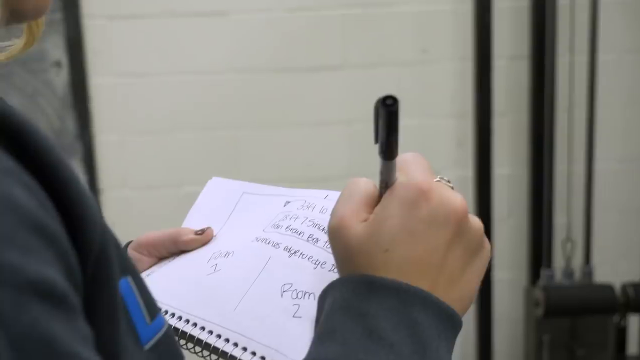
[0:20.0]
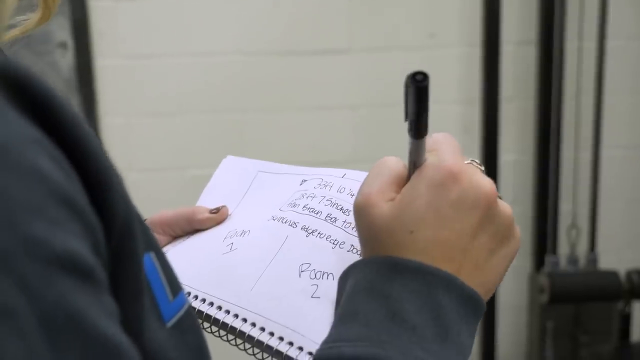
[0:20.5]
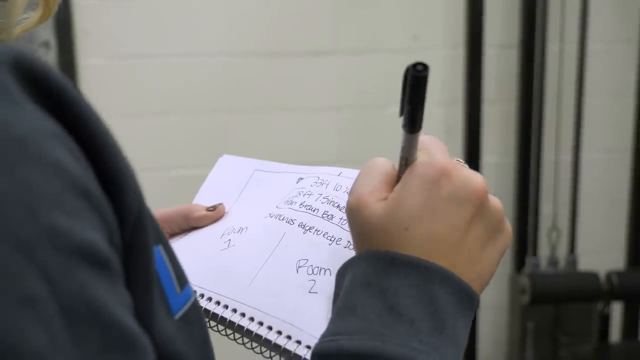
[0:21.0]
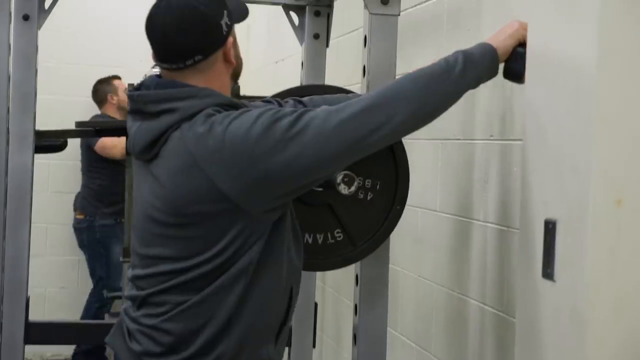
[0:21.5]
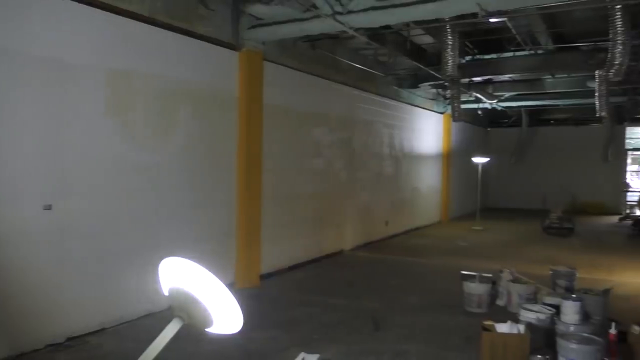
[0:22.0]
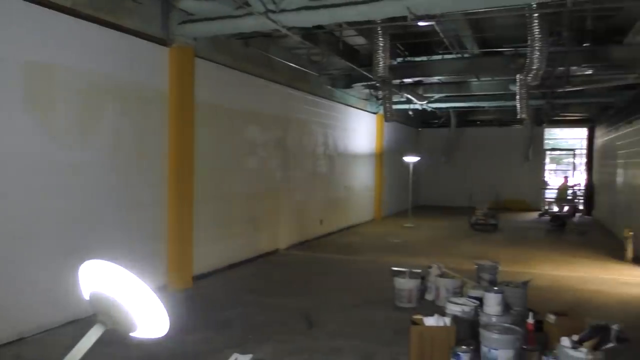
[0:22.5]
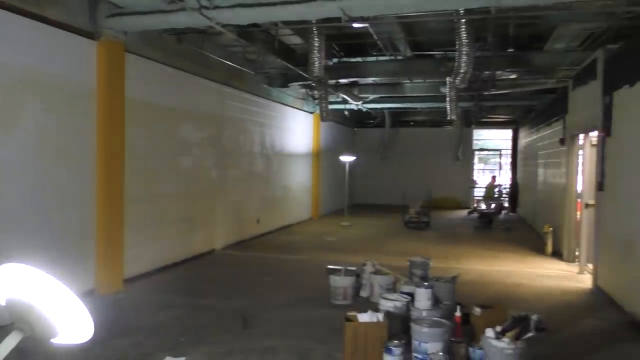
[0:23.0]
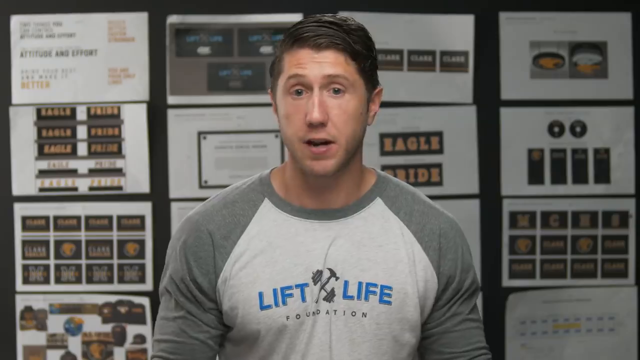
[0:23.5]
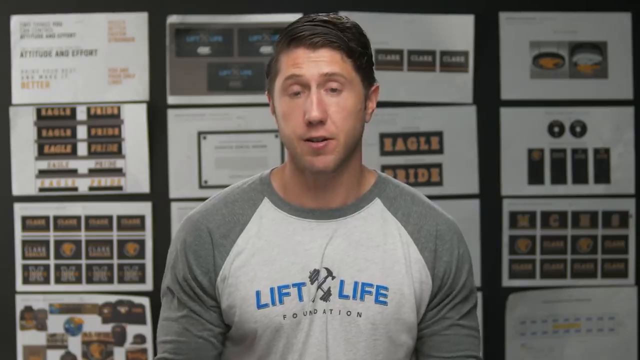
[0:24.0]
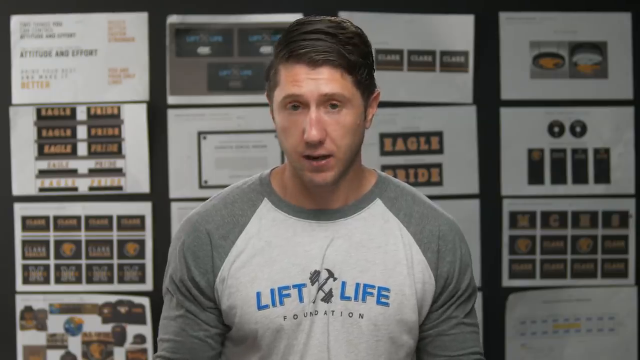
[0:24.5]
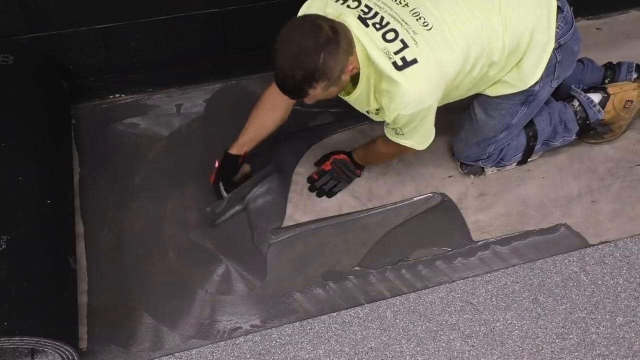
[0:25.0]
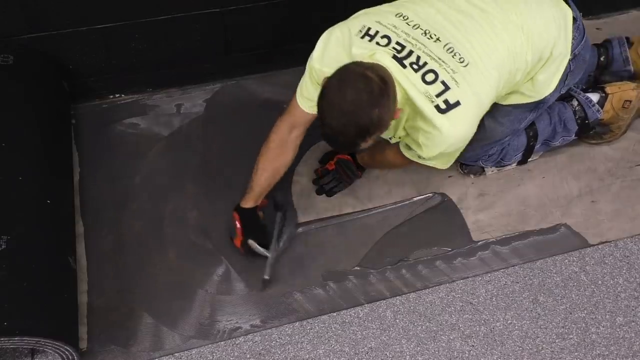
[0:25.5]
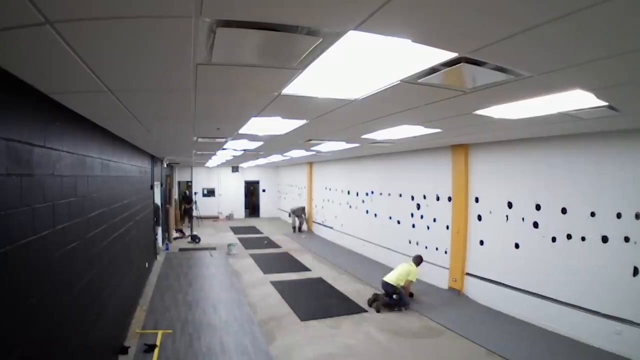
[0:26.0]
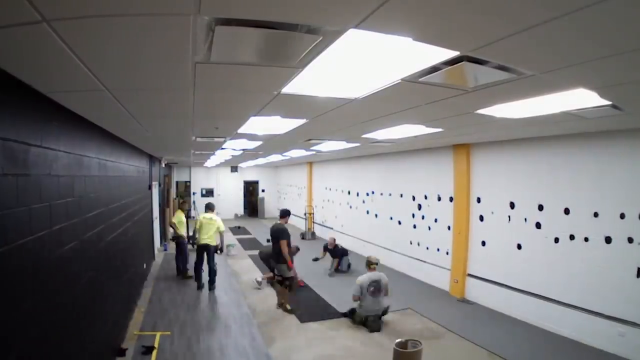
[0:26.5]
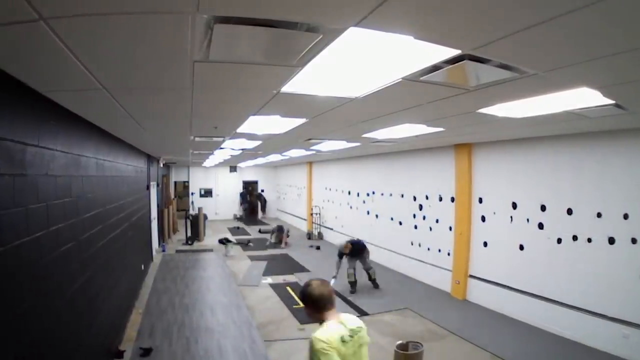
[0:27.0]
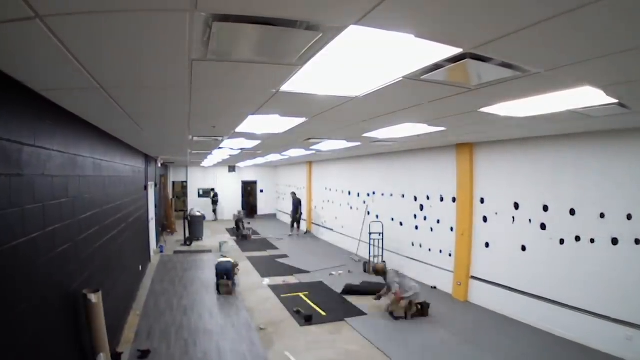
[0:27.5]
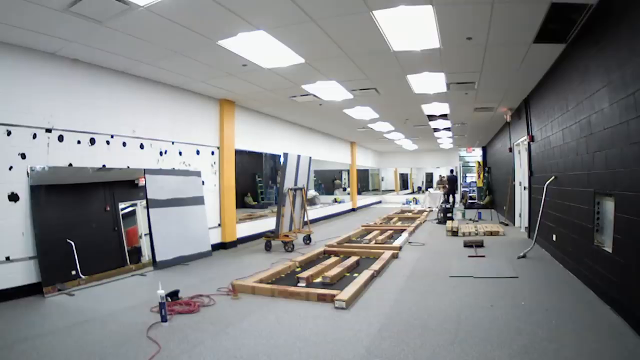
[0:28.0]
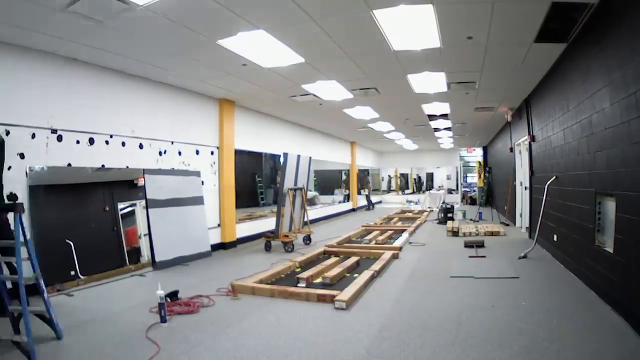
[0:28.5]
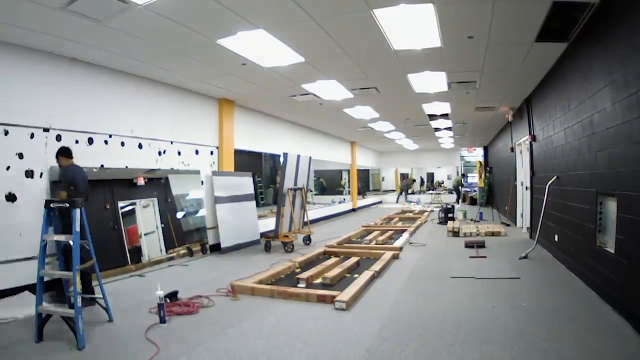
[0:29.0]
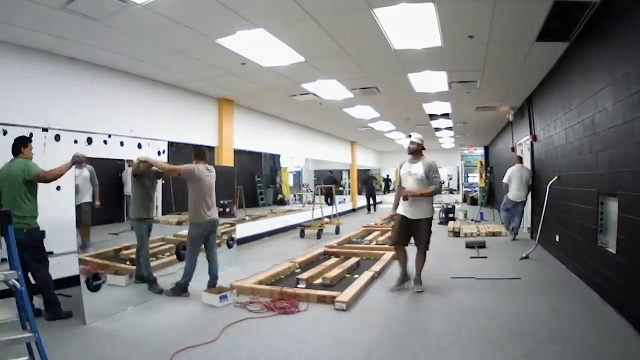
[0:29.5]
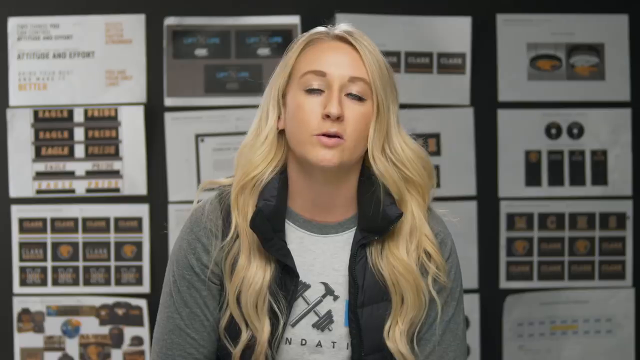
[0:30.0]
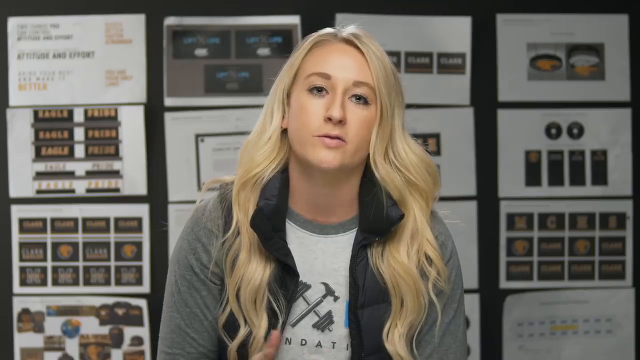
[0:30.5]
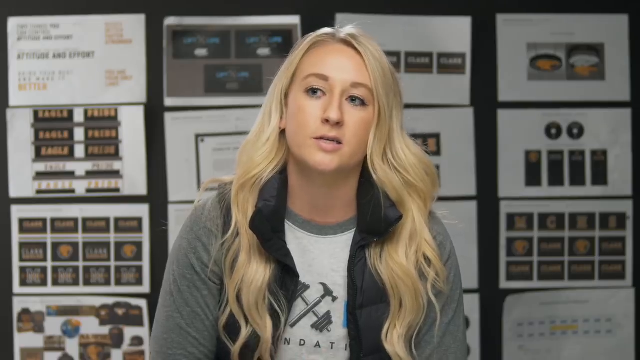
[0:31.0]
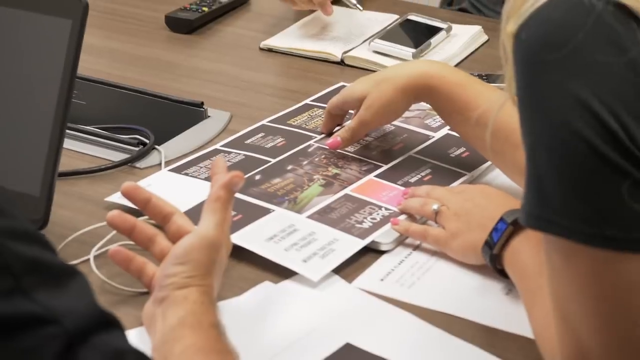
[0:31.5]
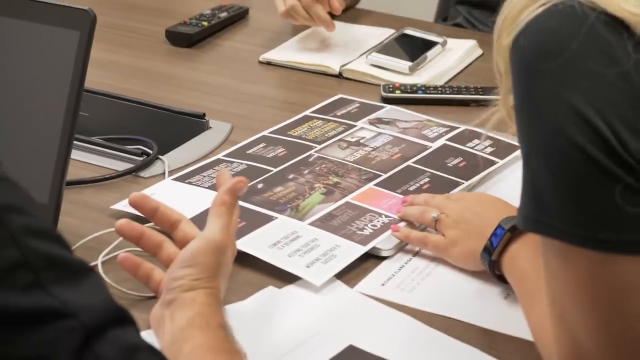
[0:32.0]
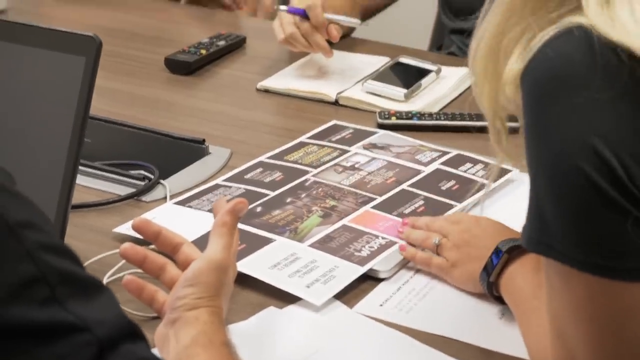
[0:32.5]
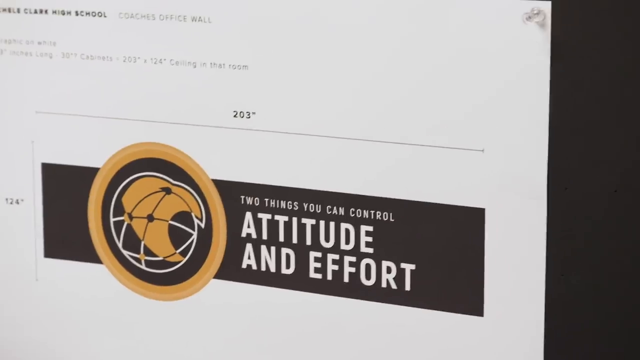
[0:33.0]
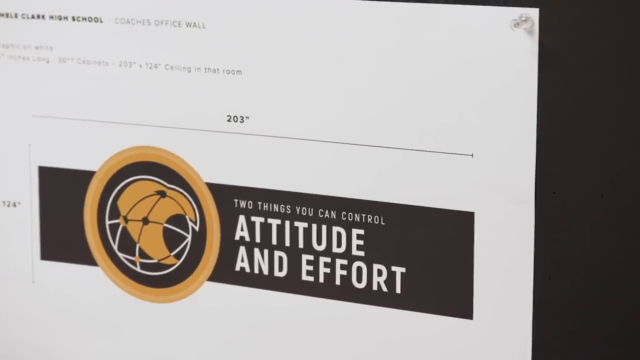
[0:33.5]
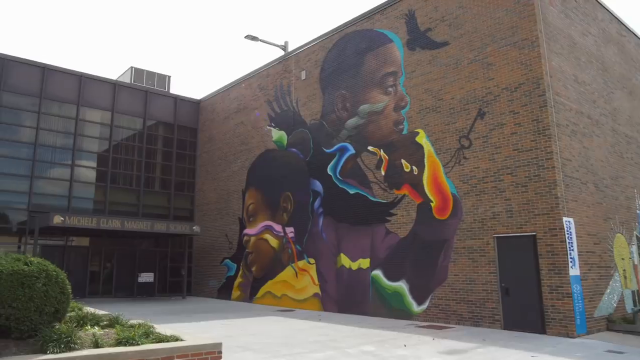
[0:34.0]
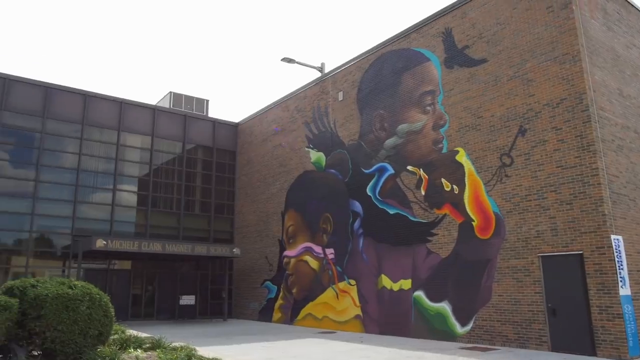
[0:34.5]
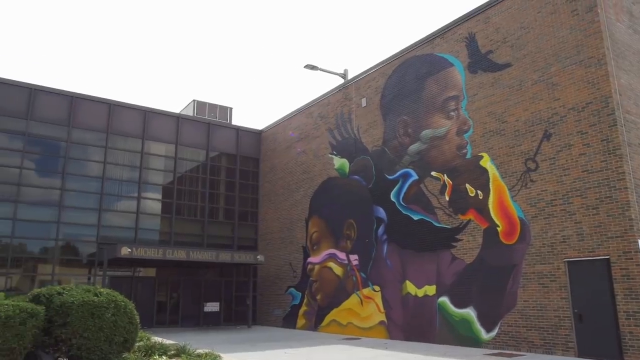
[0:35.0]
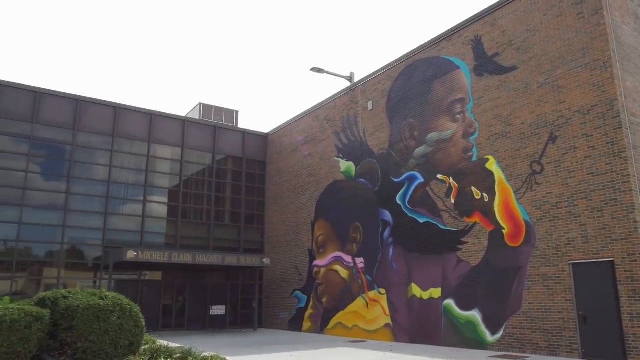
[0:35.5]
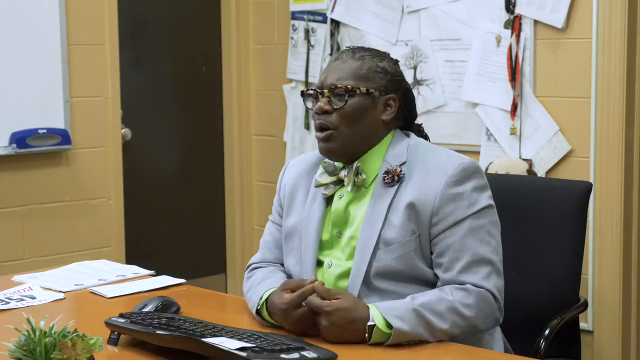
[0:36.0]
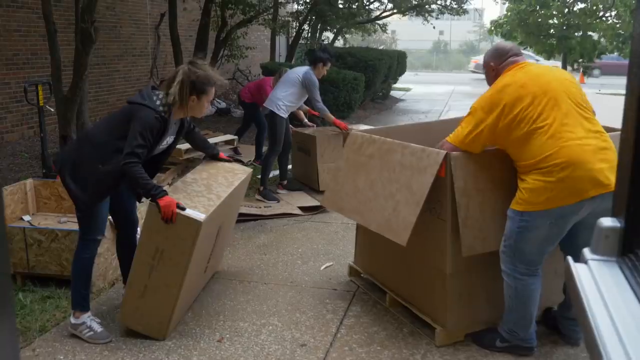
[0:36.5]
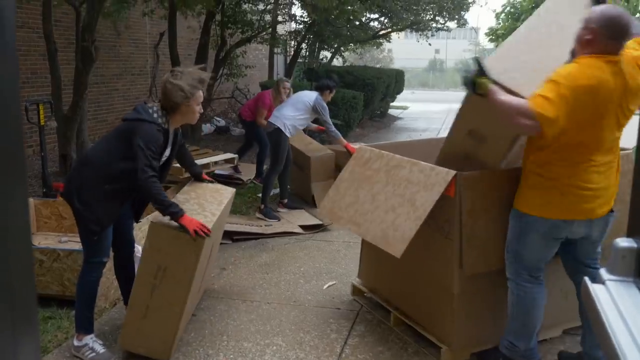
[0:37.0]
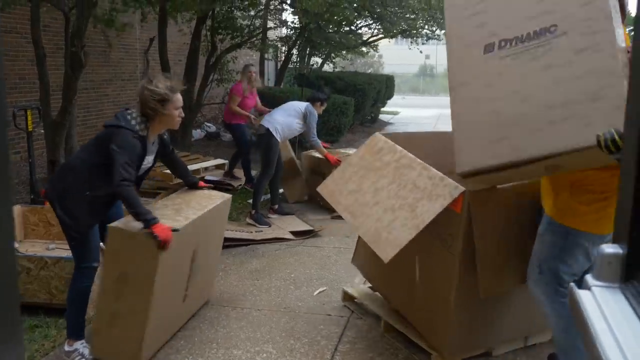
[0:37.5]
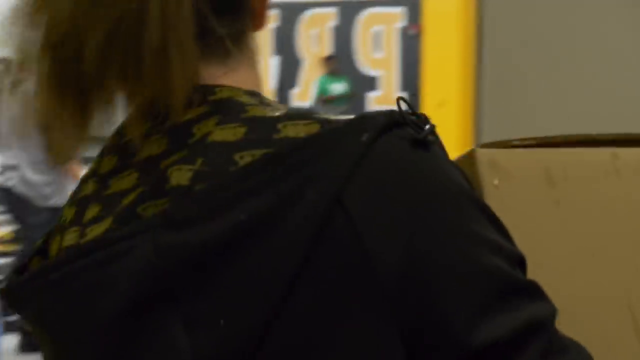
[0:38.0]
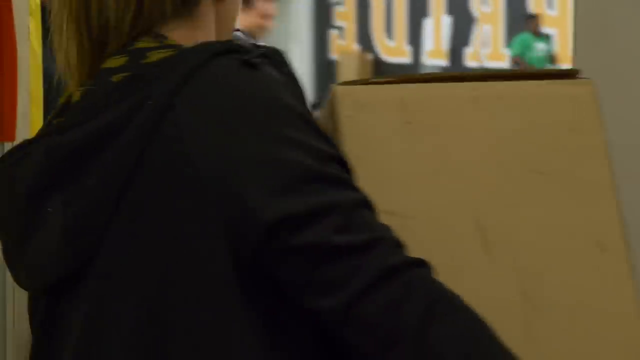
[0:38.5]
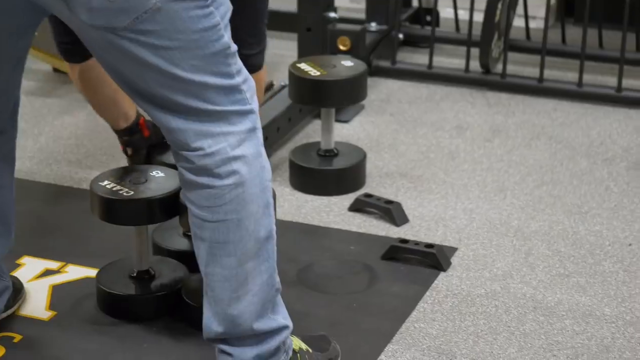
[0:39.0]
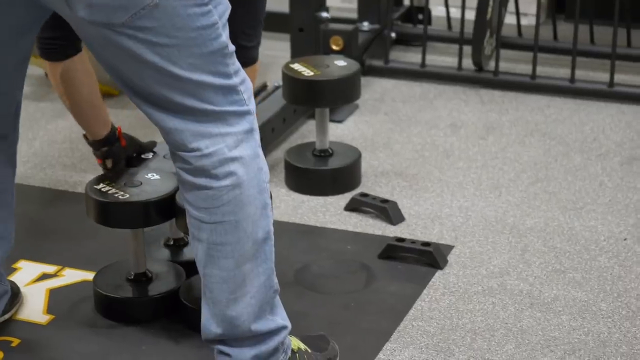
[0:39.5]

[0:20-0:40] Someone holds a piece of paper in their left hand and writes on it with a Sharpie marker held in their right hand. People in the gym continue taking measurements. The man in the raglan and the "Lyft Life" shirt speaks in front of the camera. A man in a fluorescent yellowish green shirt, blue jeans and knee pads is on the ground with what looks like a squeegee or a scraper, spreading a gray plastic liquid across the ground. Stop-motion animation inside a room shows people doing some work there, apparently some kind of renovation, and they cover one of the walls with mirrors. The blonde woman speaks to the camera, along with different photos of different things she is doing in the gym. Outside the building, a beautiful mural is painted on the side of a brick wall.